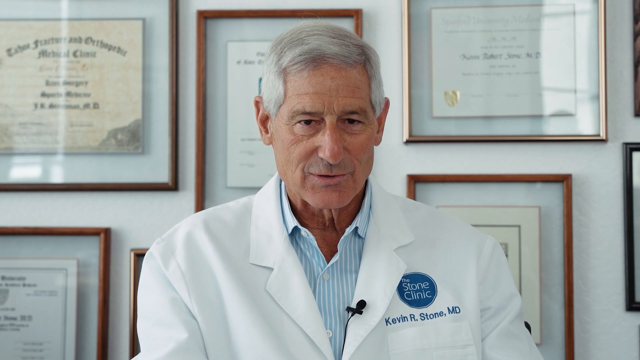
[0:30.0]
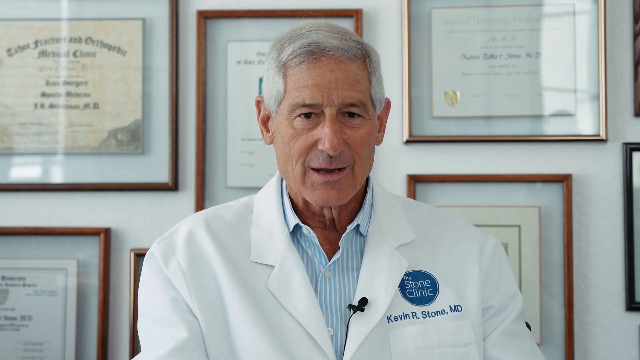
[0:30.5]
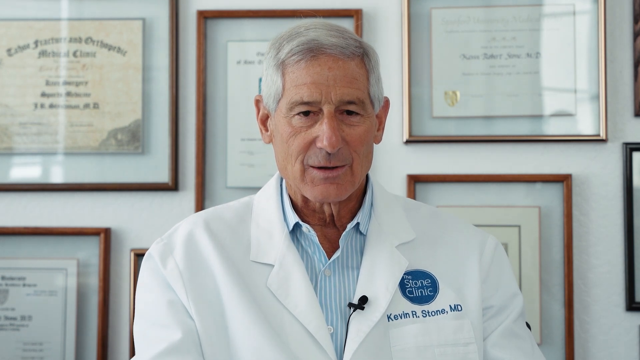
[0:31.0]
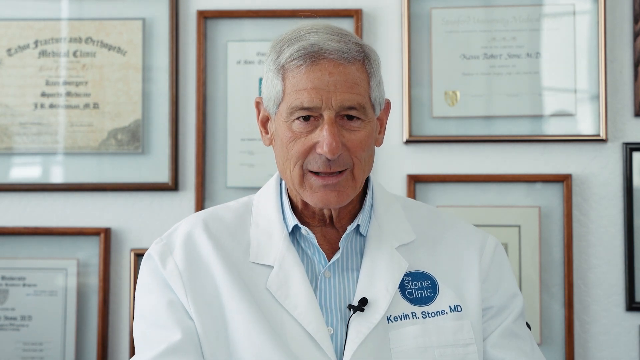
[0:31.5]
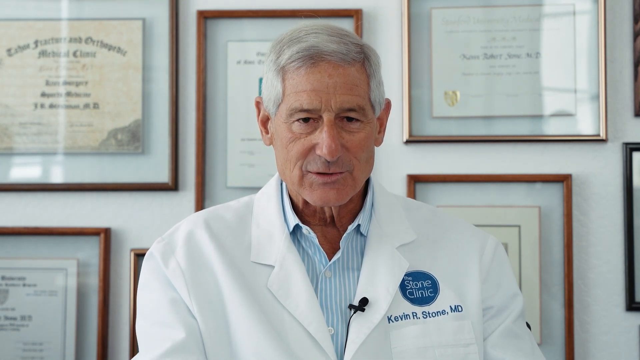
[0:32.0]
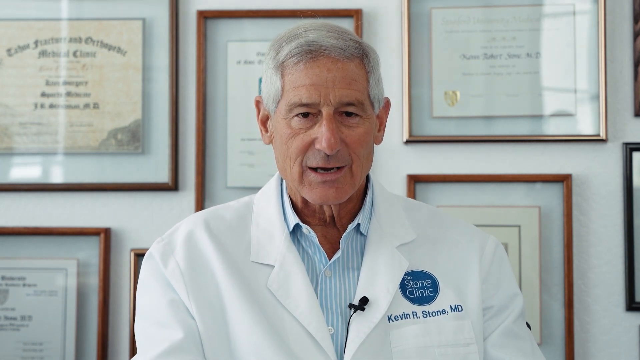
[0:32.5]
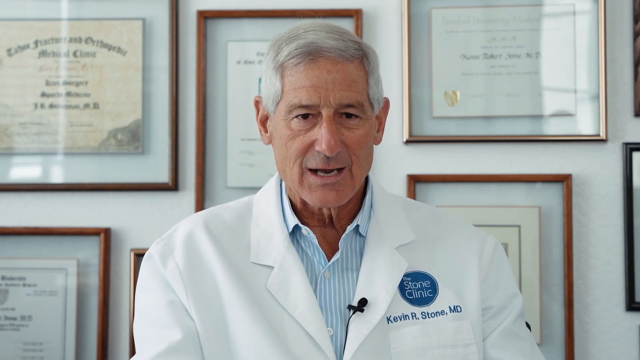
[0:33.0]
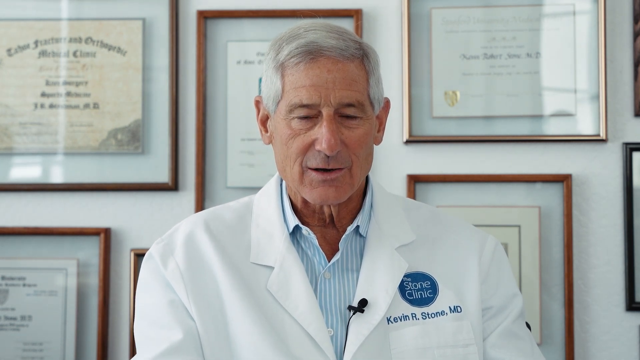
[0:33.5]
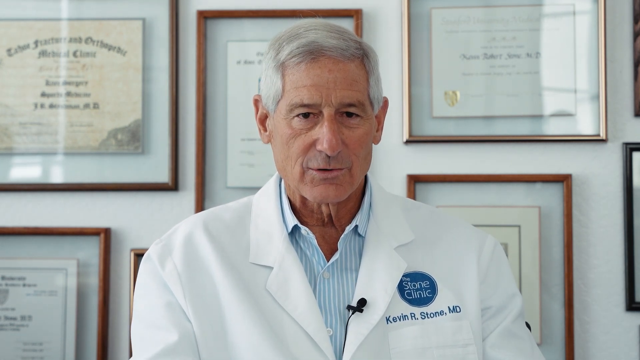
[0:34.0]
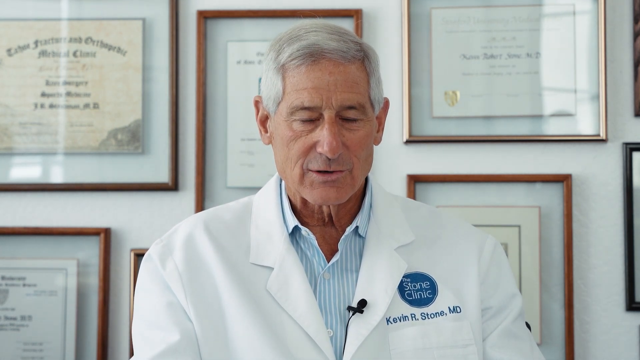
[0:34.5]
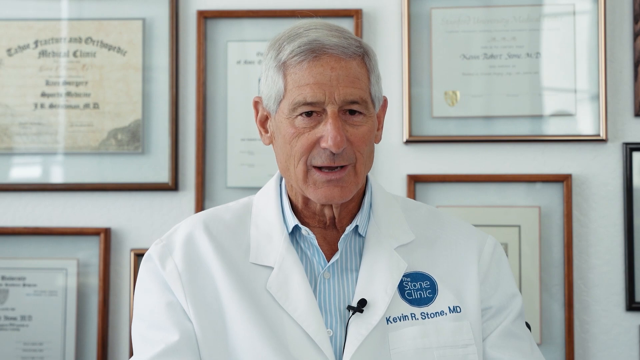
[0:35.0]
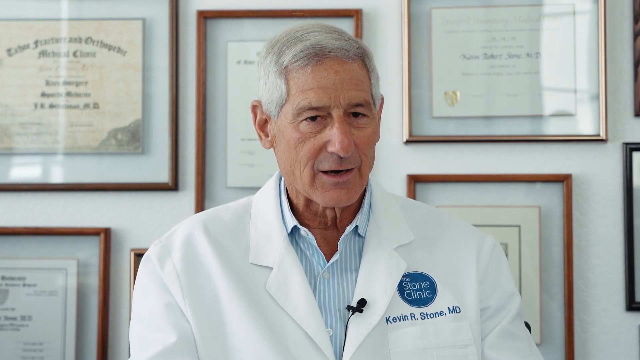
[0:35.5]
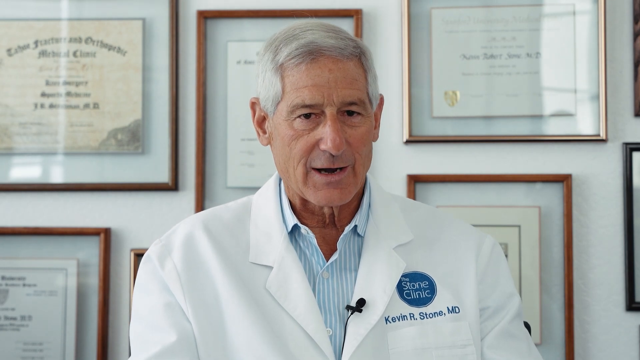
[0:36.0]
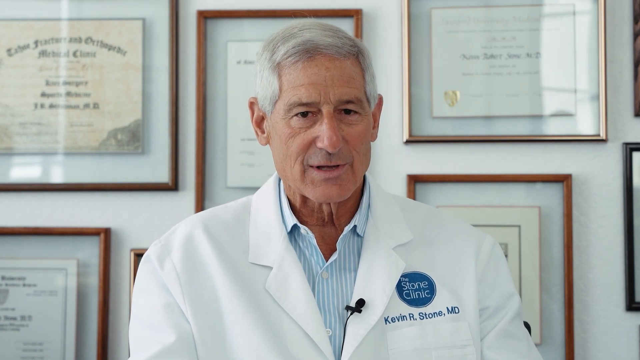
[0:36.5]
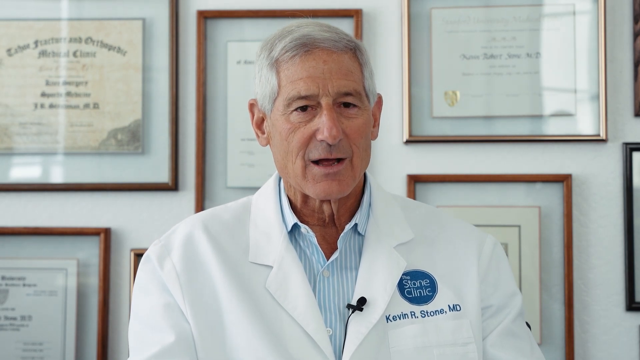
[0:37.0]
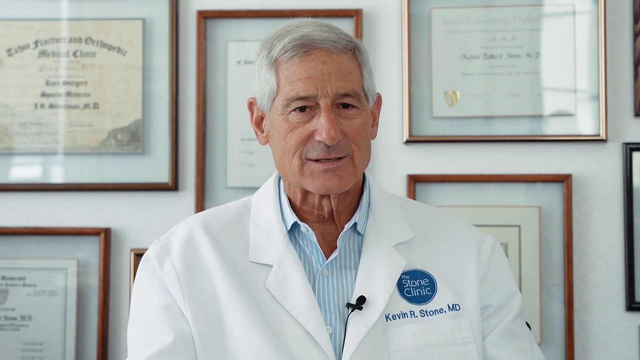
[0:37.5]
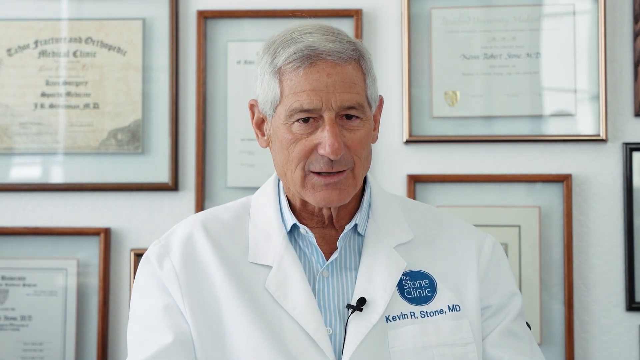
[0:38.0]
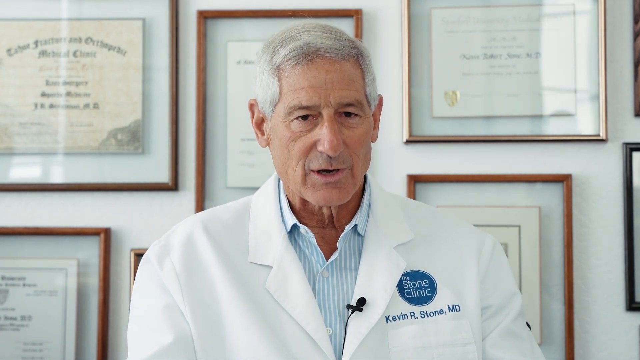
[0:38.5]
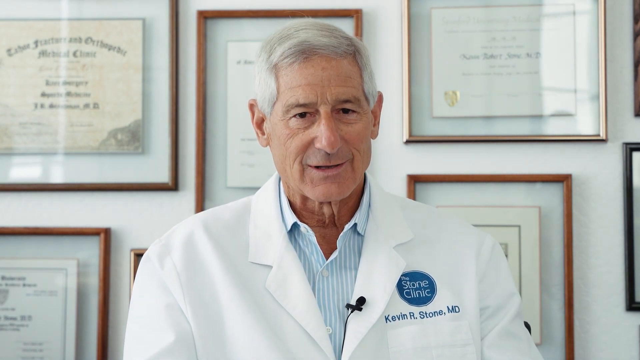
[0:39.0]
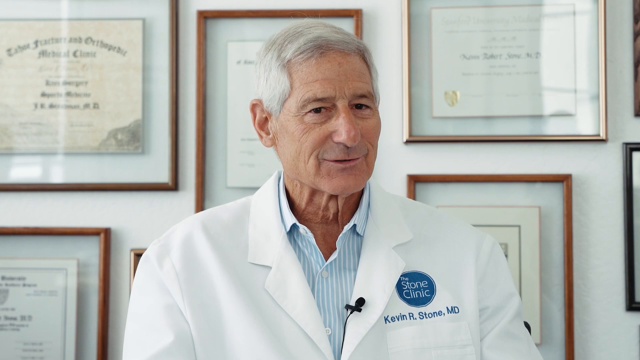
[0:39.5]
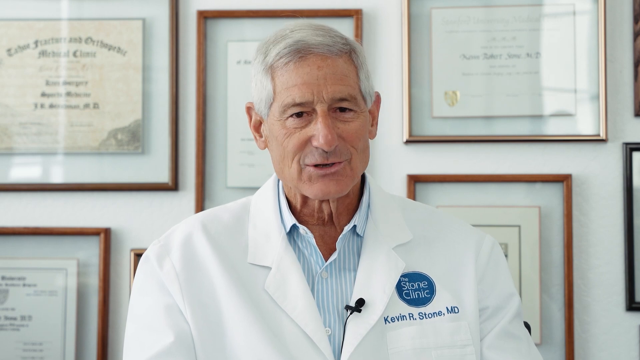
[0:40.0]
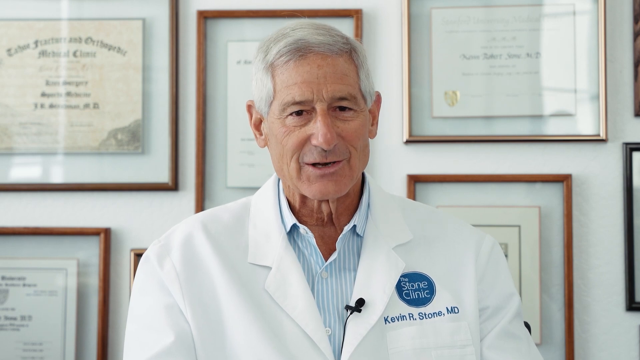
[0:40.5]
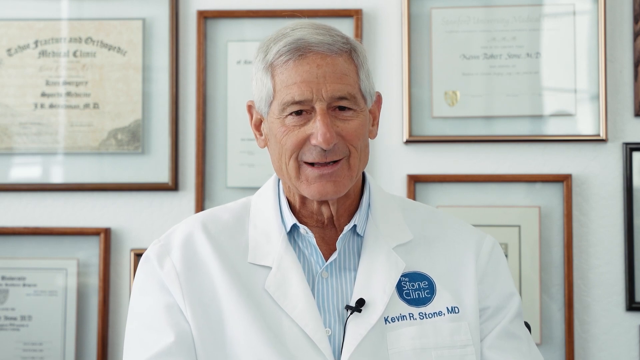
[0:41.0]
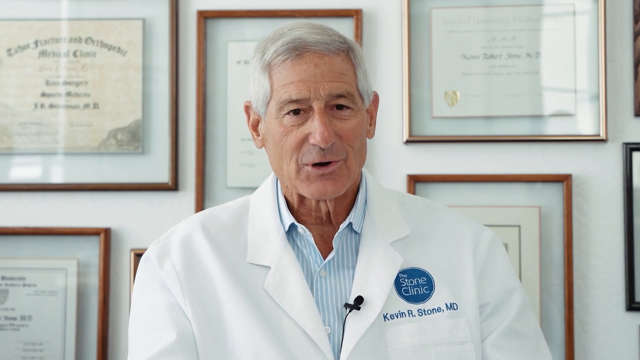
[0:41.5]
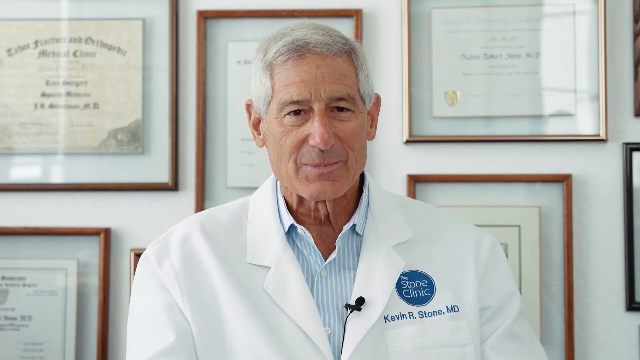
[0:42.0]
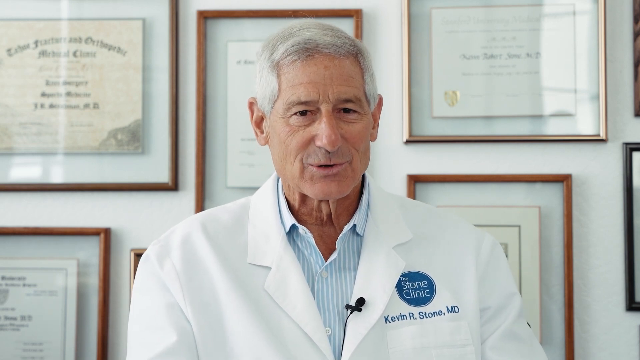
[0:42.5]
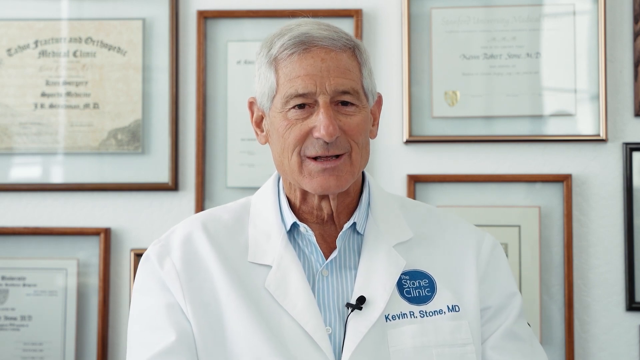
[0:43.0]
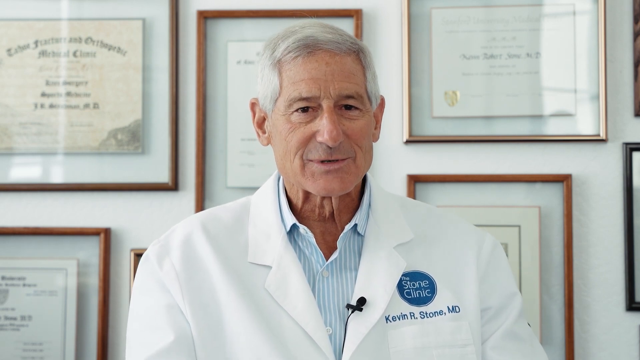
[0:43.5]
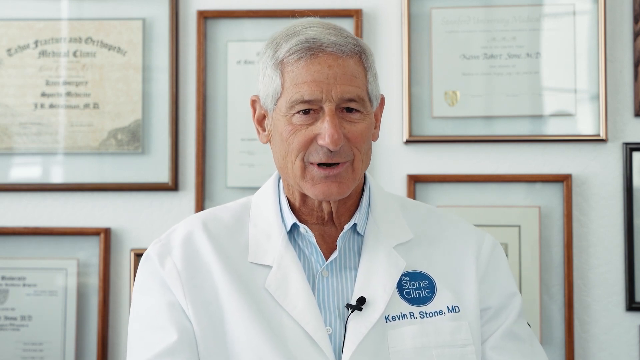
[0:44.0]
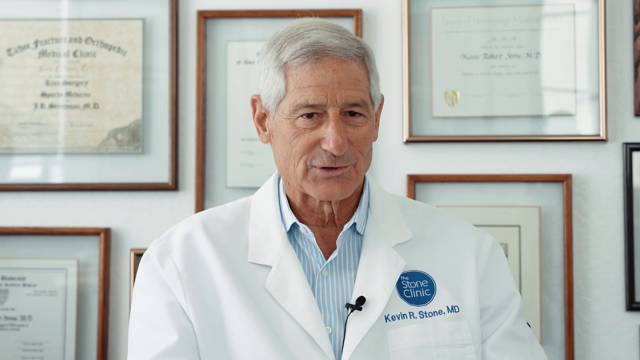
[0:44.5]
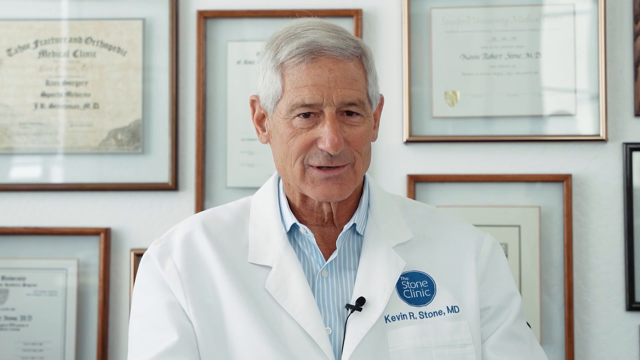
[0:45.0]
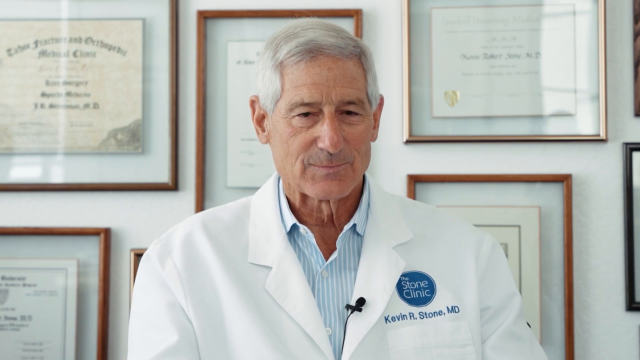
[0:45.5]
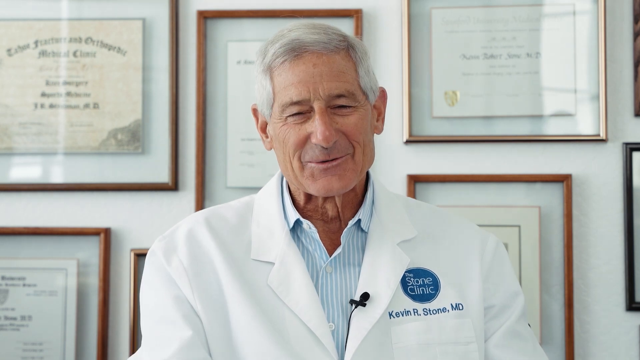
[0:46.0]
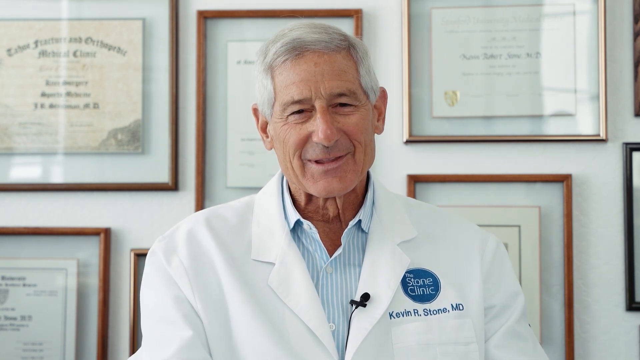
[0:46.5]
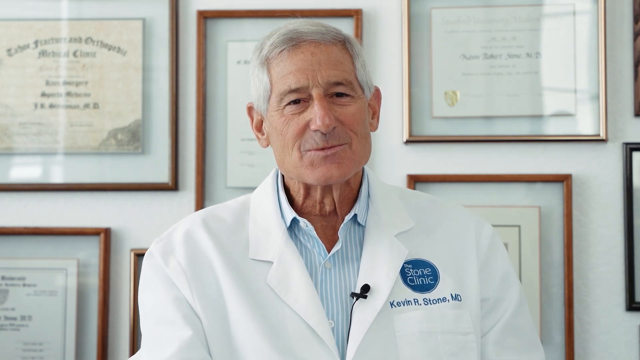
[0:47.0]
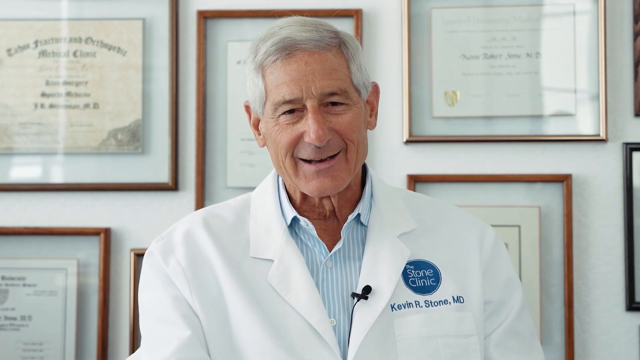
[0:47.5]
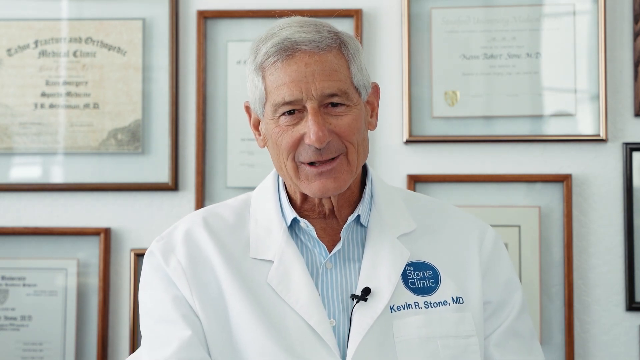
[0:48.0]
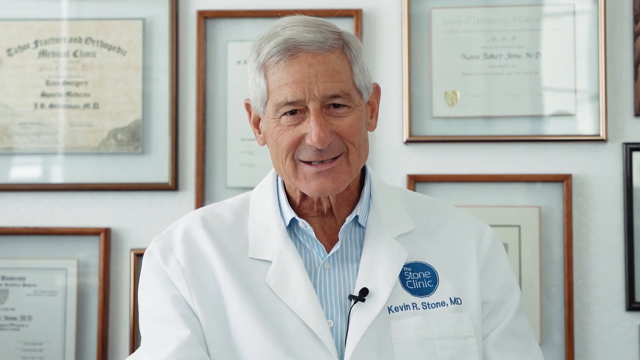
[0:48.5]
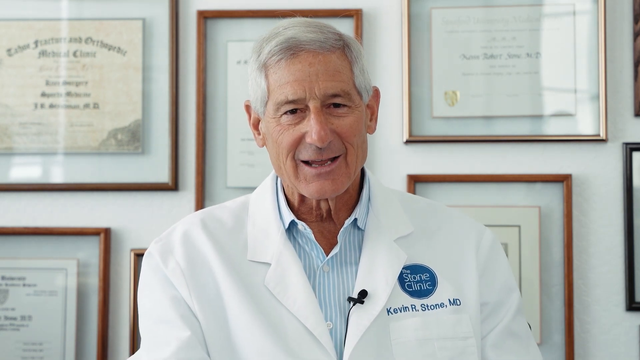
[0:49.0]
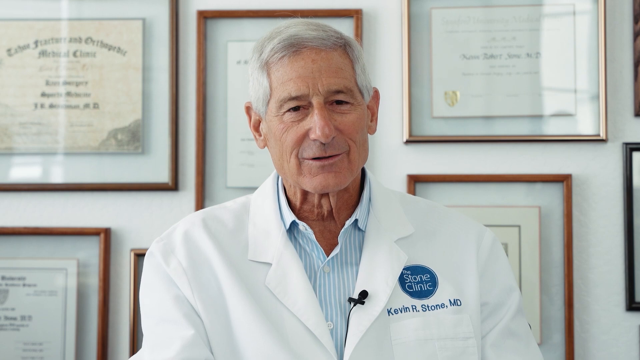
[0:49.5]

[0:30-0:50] Dr. Kevin R. Stone, MD, founder of the Stone Clinic, is being interviewed in his office and smiles. He sits in front of the camera wearing a white lab coat with the clinic's name and logo on the left breast pocket, and his name is also written on the coat. A lapel microphone is on the collar of his lab coat, and he wears a light blue and white striped button-down collared shirt. He has gray hair and is clean shaven. Mounted on the wall behind him are many qualifications, diplomas and certificates framed in glass with wood or possibly black lacquered wood frames.